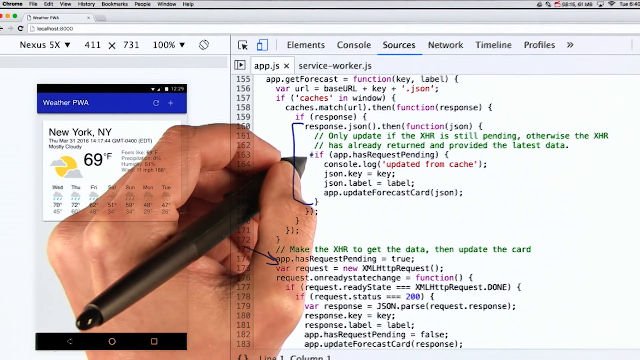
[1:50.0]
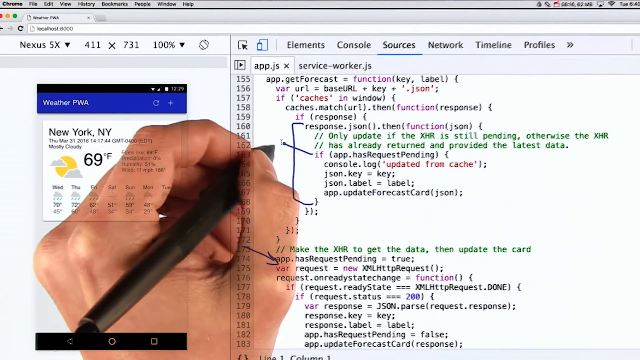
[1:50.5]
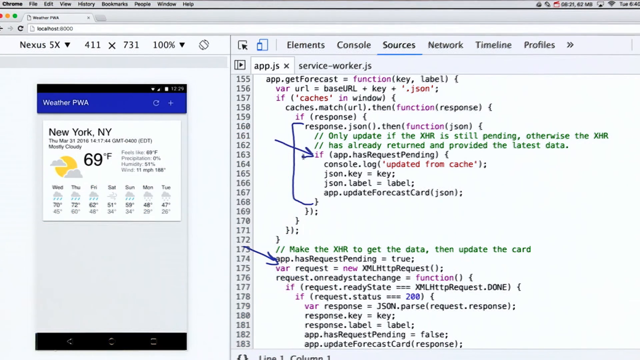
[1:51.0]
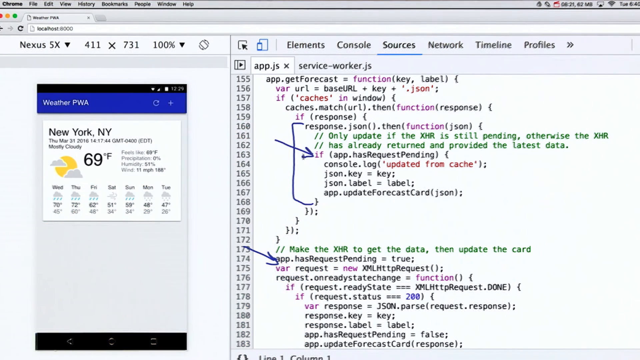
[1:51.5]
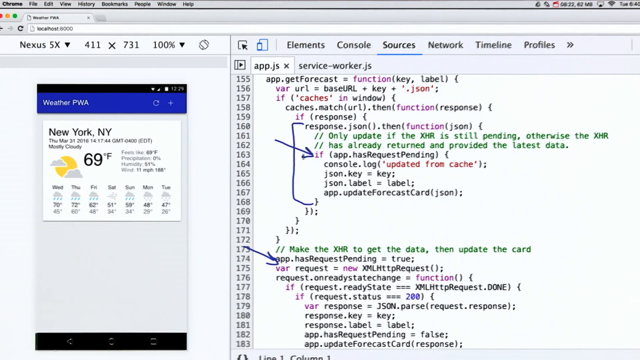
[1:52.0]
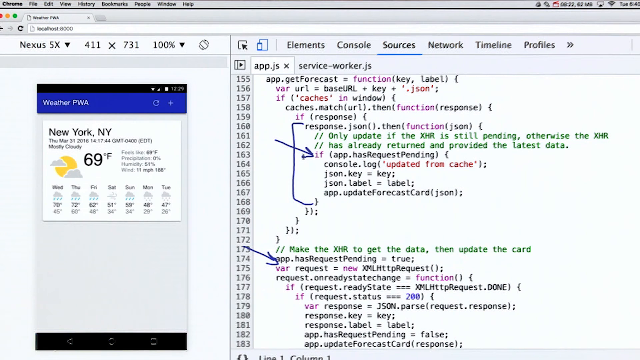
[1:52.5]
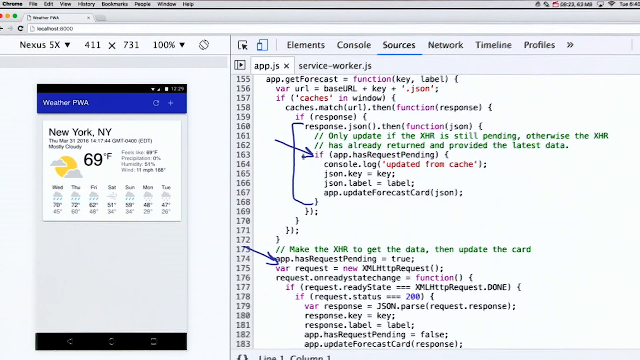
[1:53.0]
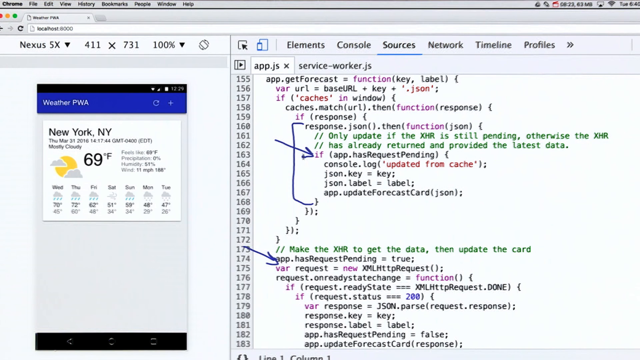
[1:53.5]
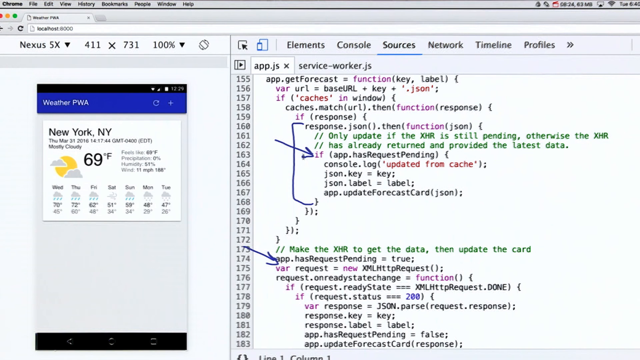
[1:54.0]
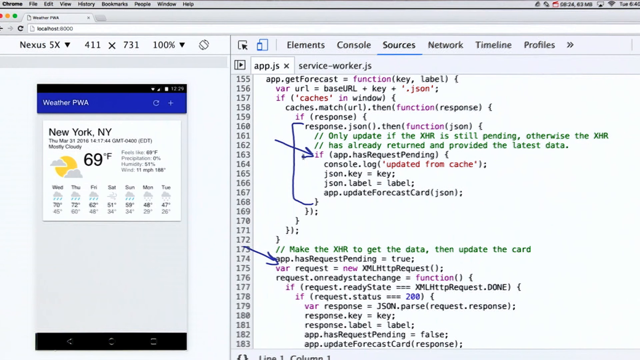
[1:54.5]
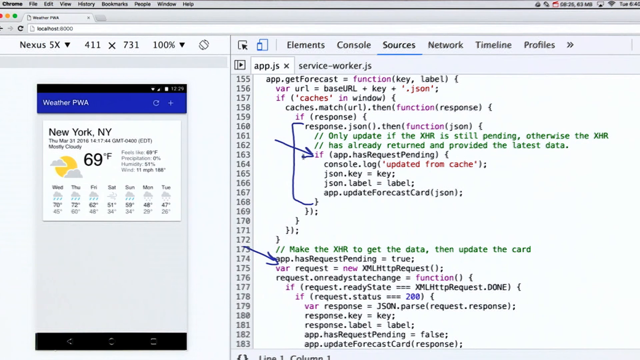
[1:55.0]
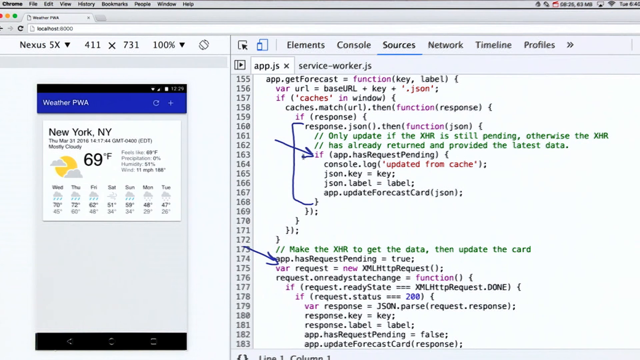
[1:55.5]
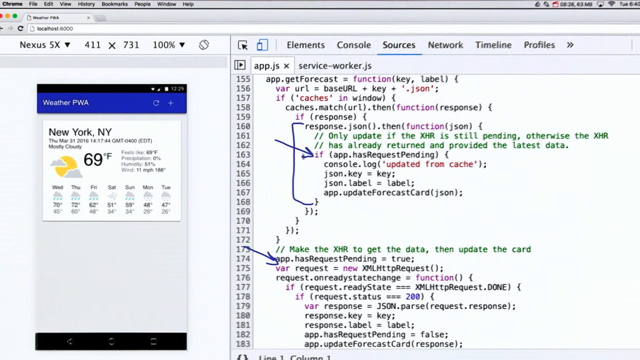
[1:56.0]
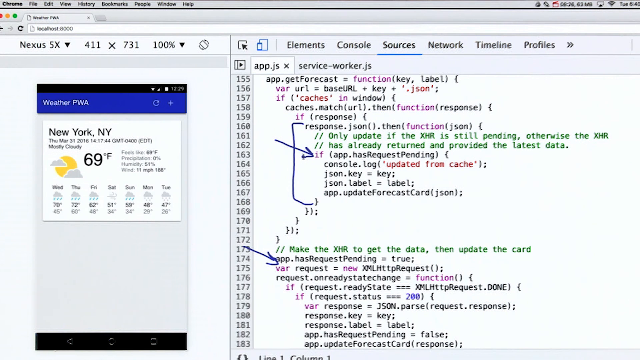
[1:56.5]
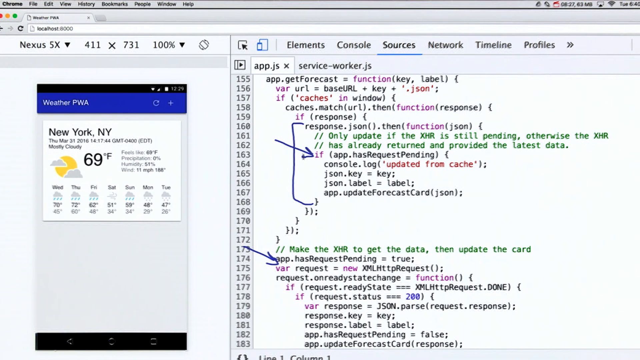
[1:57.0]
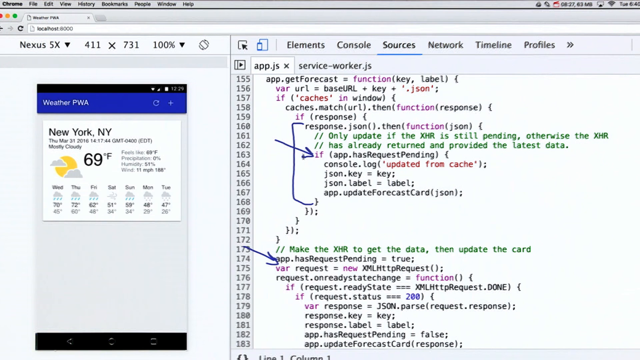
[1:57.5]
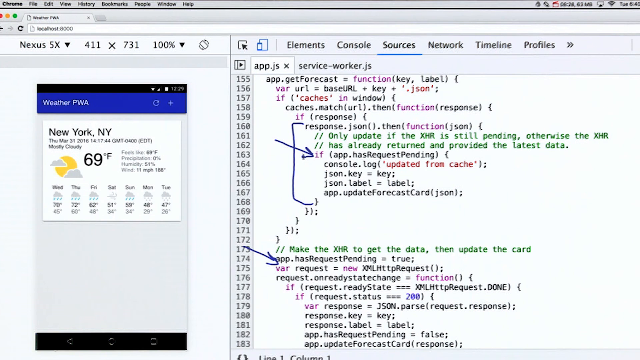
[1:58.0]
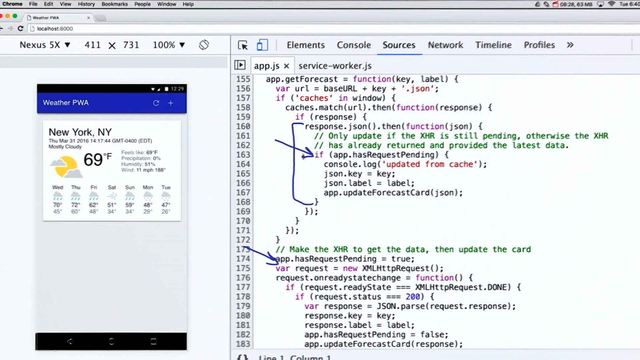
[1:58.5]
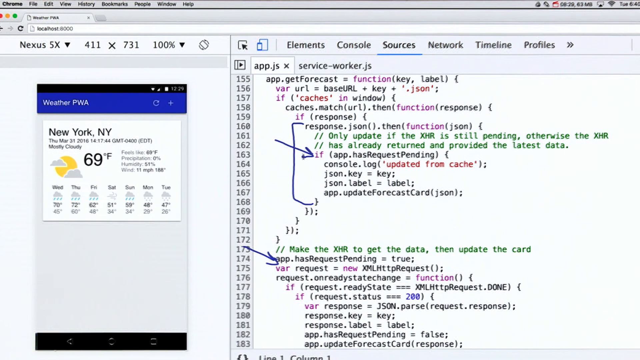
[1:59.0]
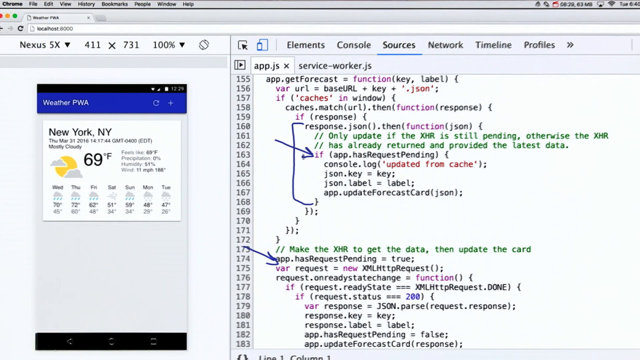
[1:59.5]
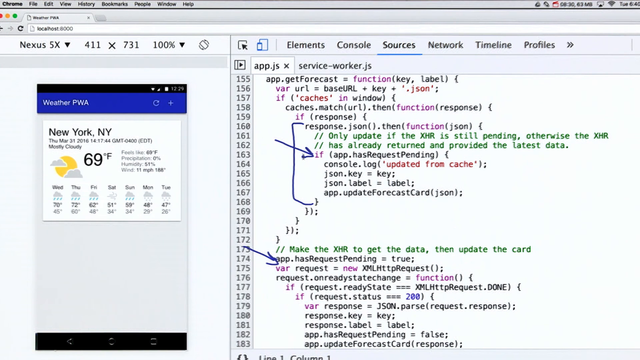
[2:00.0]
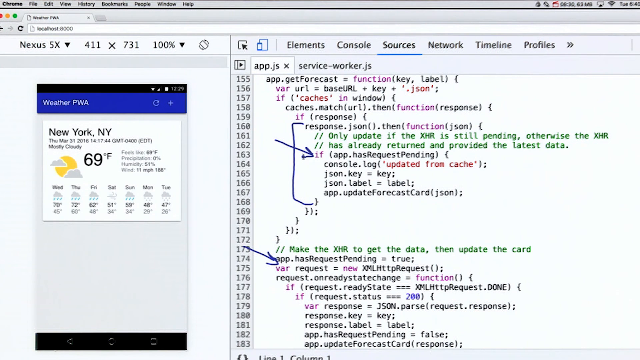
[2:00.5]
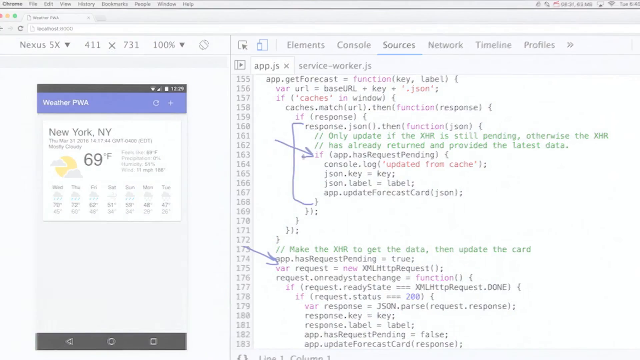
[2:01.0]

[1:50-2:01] A transparent person's hand holds a pen in front of a computer screen showing programming code. On the left, a weather box reads "New York, New York" and shows 69 degrees Fahrenheit. To the right, a long list of programming with line numbers runs down the middle. The person draws connecting lines between a couple of the sections and draws arrows to connect some areas.